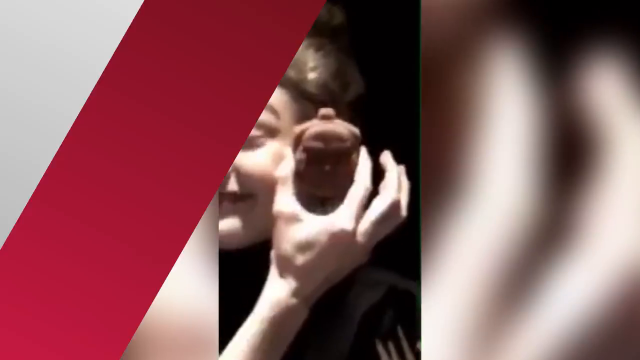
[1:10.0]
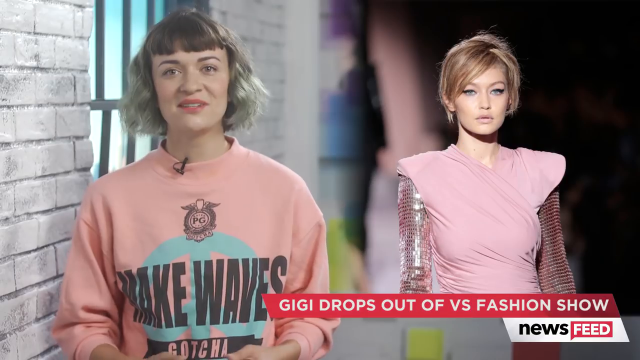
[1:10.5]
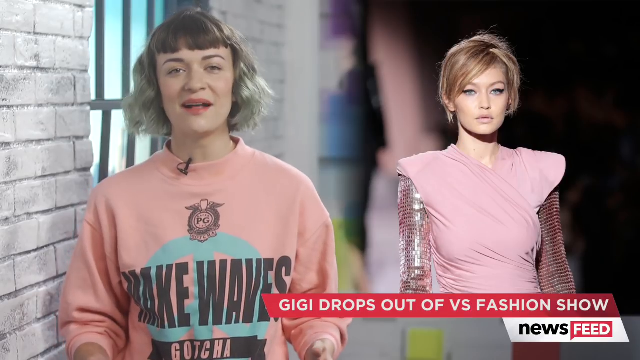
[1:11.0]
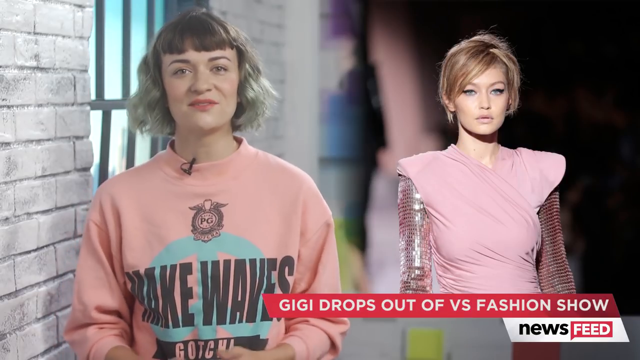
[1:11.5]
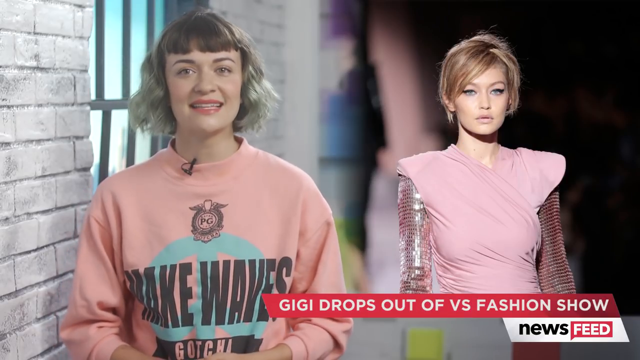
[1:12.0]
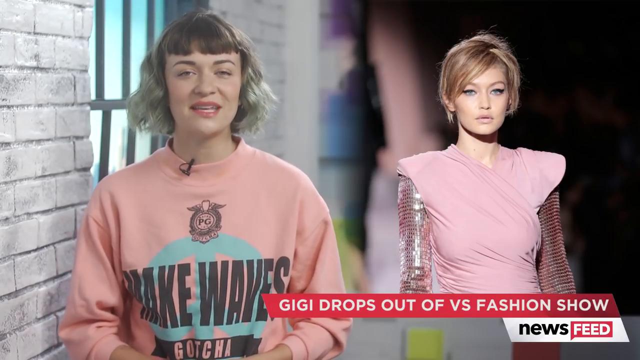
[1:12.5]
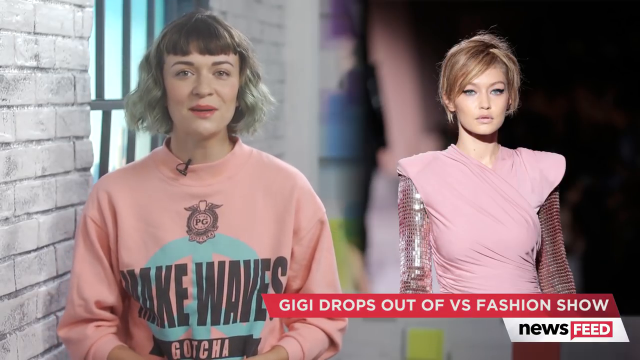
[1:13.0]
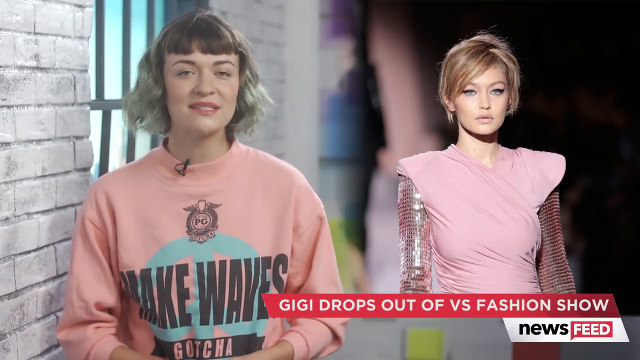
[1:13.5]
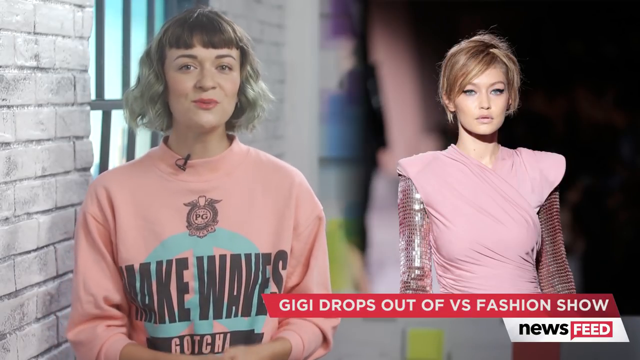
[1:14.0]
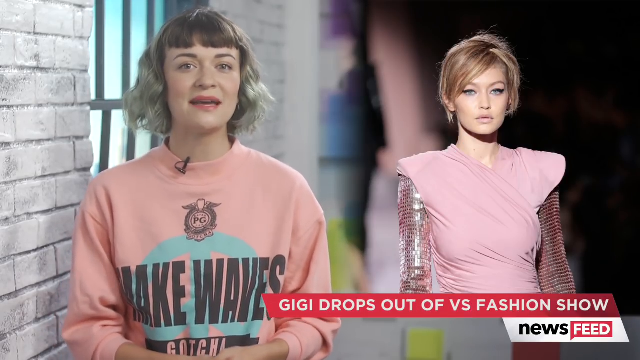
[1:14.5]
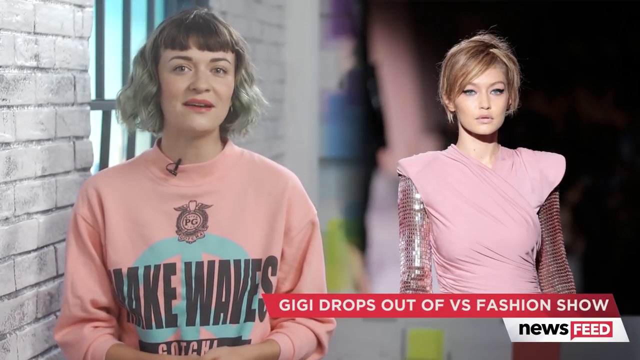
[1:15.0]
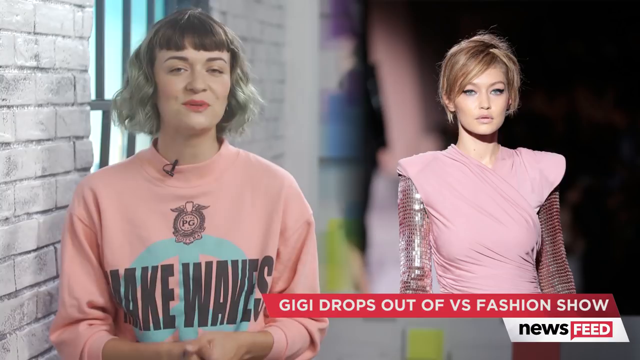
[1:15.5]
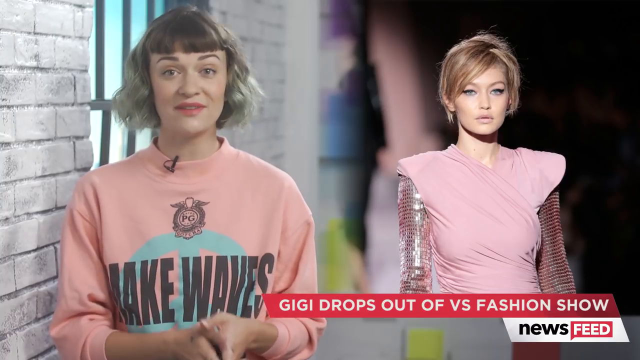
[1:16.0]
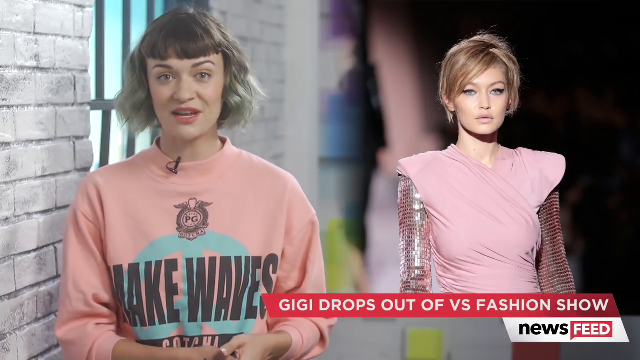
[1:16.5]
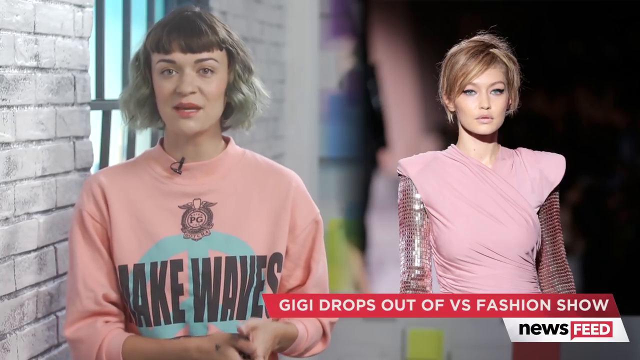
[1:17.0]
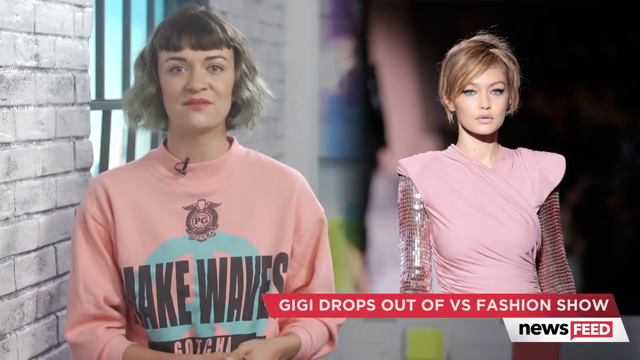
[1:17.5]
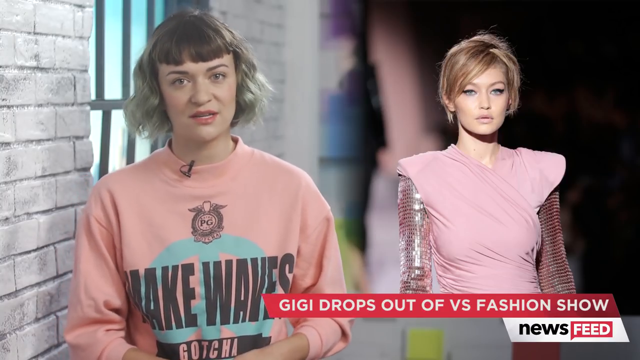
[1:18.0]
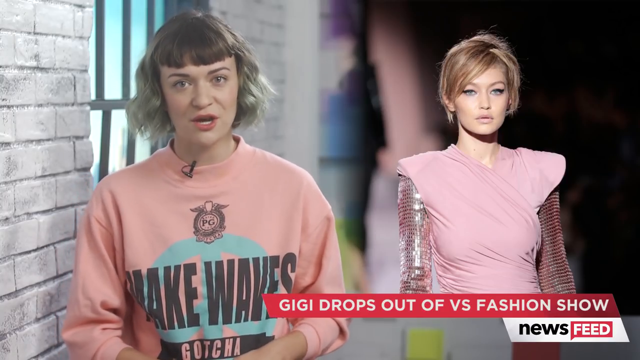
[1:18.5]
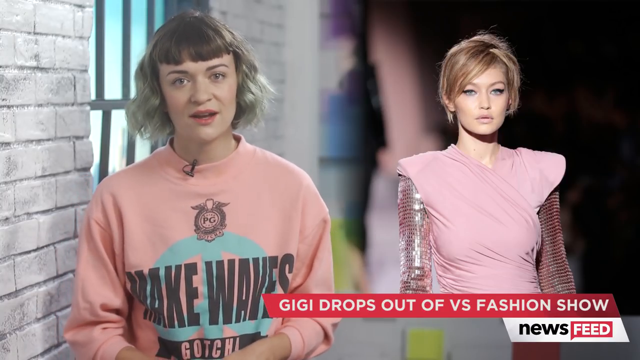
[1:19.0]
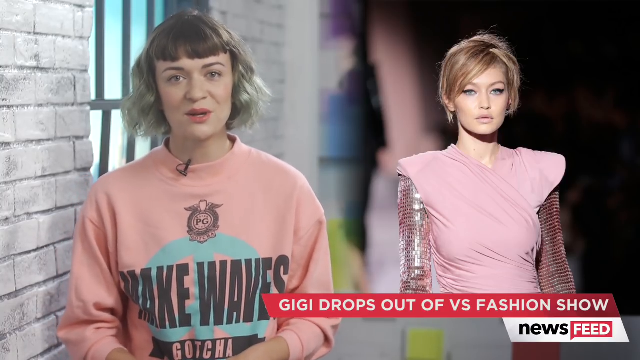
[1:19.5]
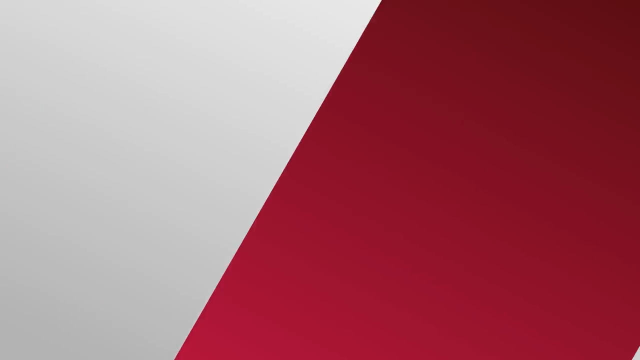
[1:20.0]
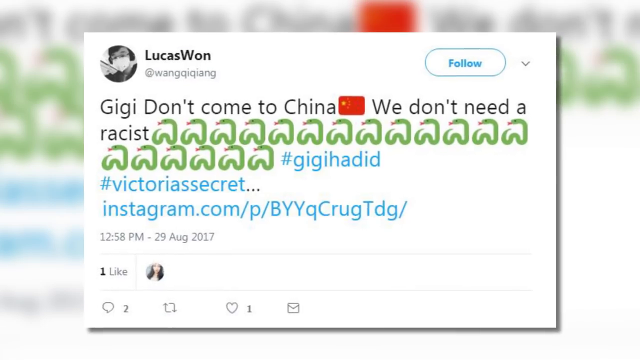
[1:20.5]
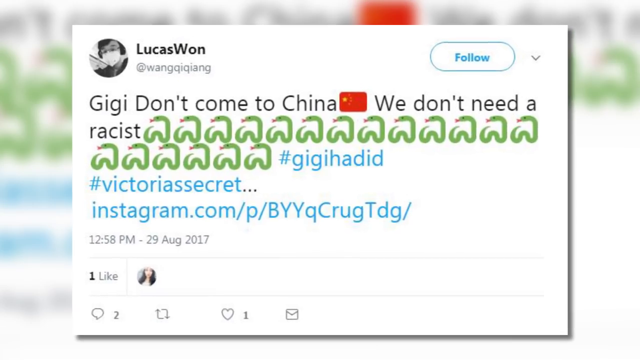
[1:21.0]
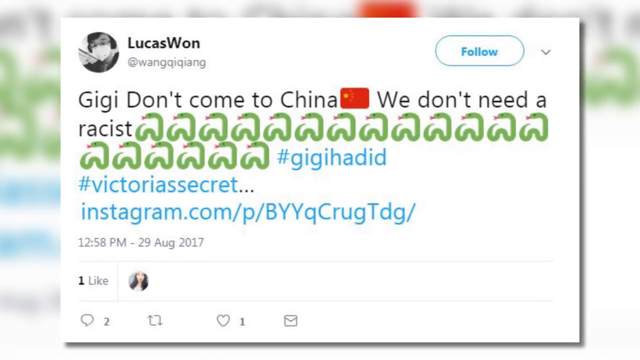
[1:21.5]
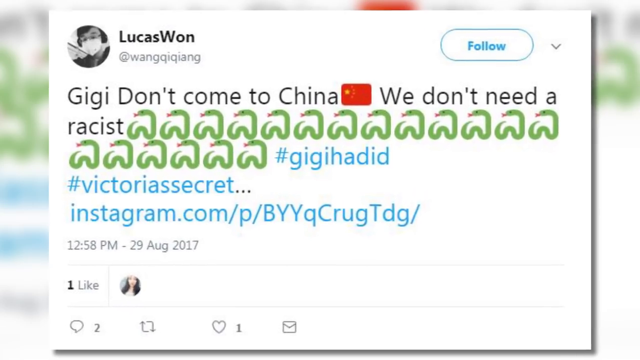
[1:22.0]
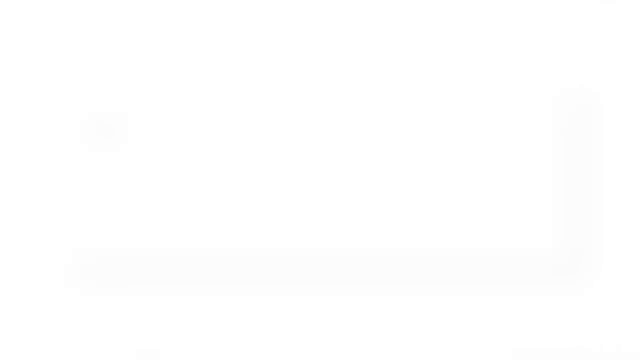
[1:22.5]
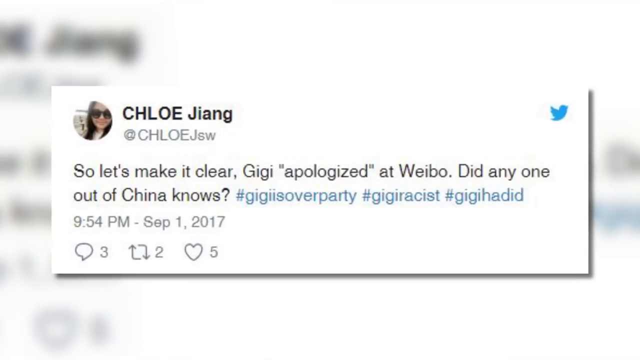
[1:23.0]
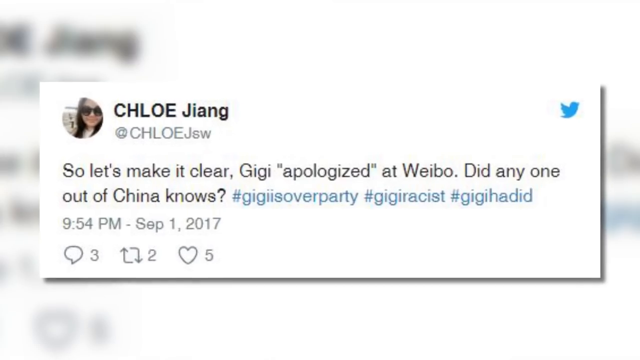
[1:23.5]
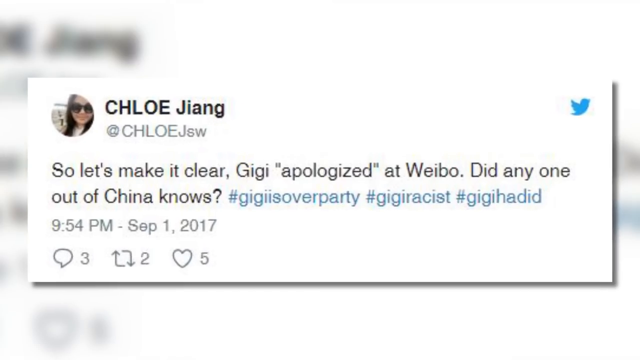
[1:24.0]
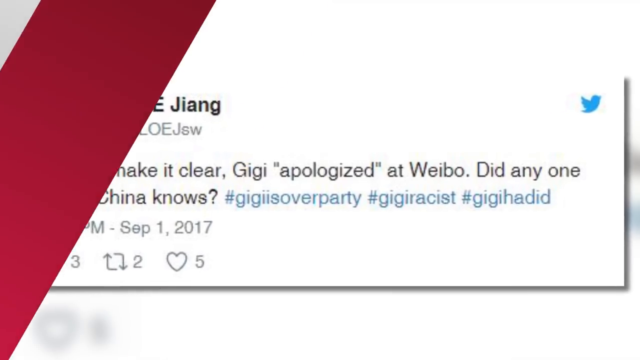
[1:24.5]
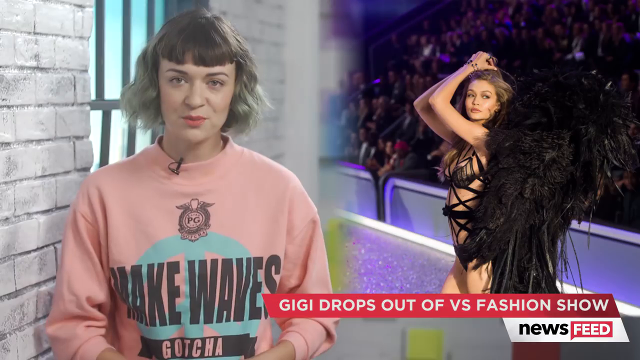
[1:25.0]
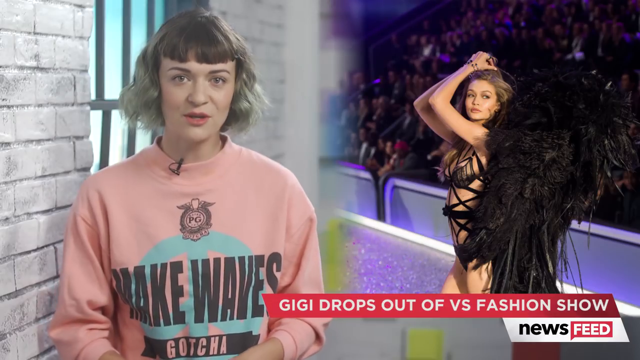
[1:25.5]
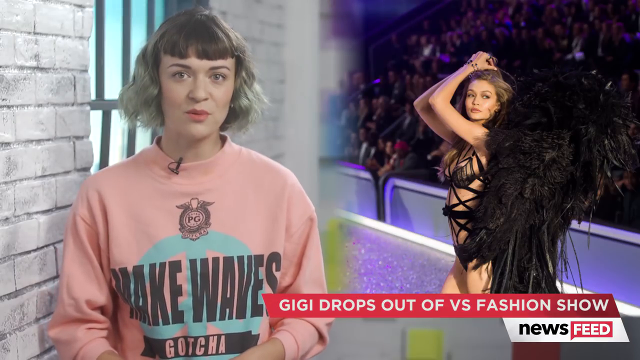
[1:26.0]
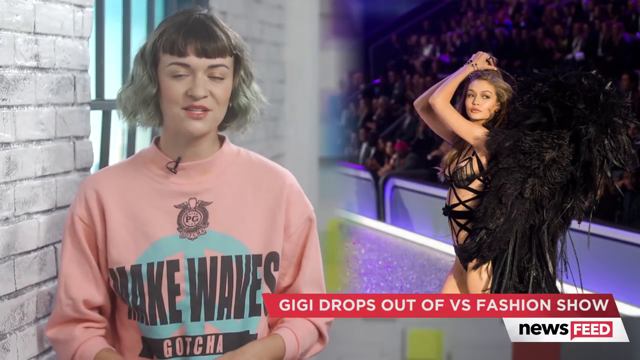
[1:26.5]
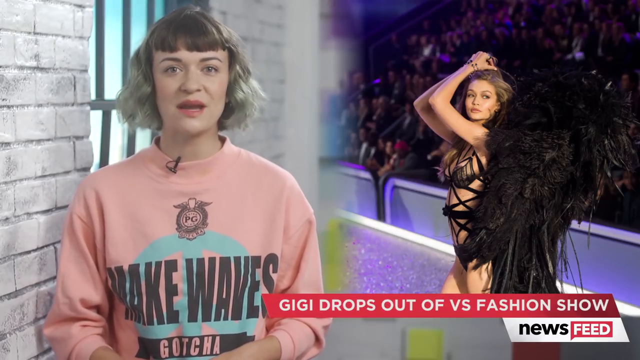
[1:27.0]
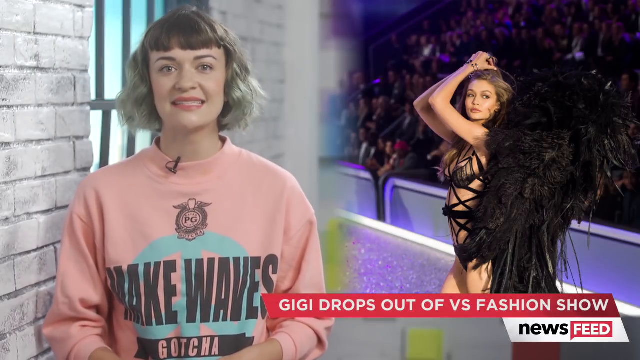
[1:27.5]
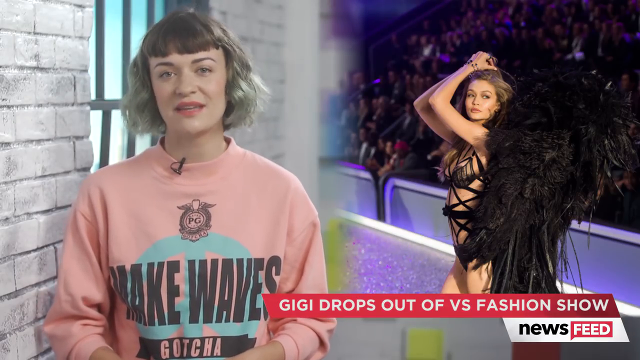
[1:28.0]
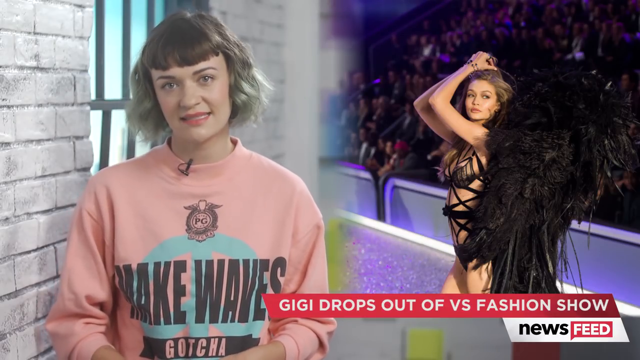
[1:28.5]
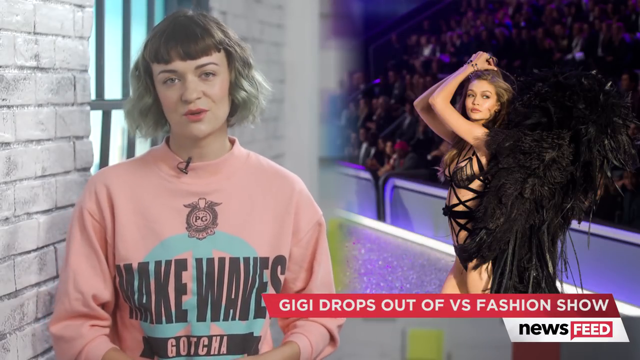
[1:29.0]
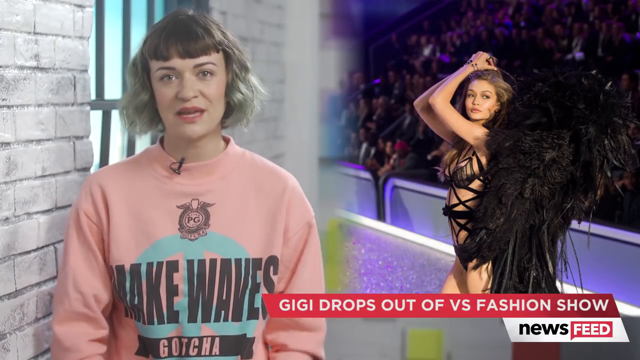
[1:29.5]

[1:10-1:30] A video shows someone holding up something brown between their thumb and index finger, in a column in the center of the screen. On the left is a white column with a big red line through it, and on the other side is a big blurry rectangle. The shot switches to the woman who was speaking, on the left in the same sweatshirt. On the right is a picture of the model in a pink outfit with shiny coverings over her arms and short, slightly messy hair parted in the center that comes down on both sides. The woman on the left keeps speaking quickly, raising her hands up and down occasionally. Next comes a social media post by someone spelled "l-u-c-a-s-w-o-n", with text reading "Gigi don't come to China, we don't need a racist", followed by a number of green icons that look like snakes, hashtags for Gigi Hadid and Victoria's Secret, and a link to Instagram. The video zooms into another social media post from someone called "chloe j-i-a-n-g", with text at the bottom beginning "So let's make it clear Gigi apologized at weibo" and hashtags including ones for Gigi racist and Gigi Hadid. It then returns to the woman talking on the left, with the model Gigi Hadid on the right in an outfit that is mostly just black strings.